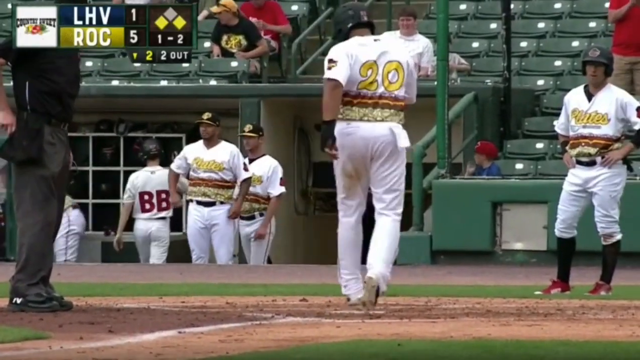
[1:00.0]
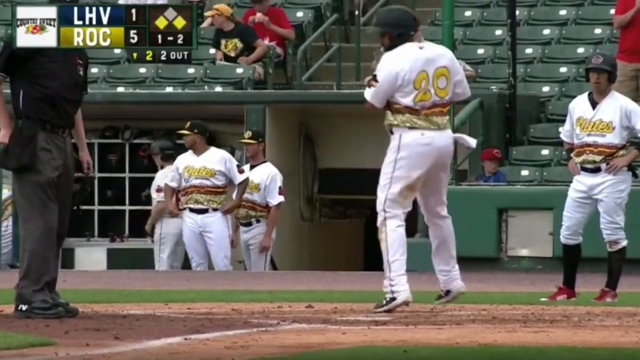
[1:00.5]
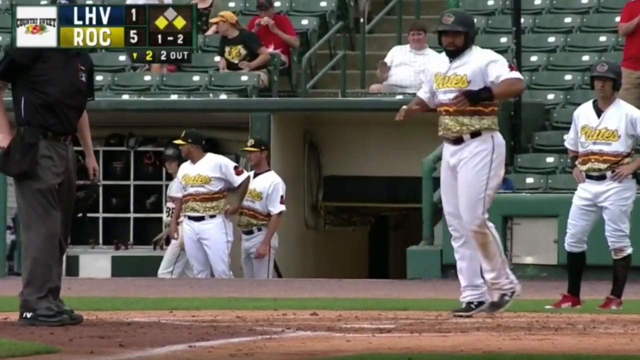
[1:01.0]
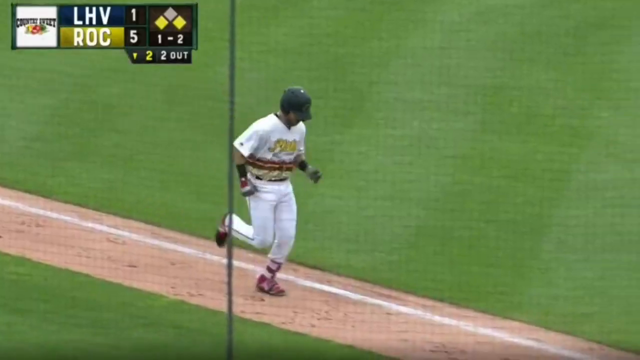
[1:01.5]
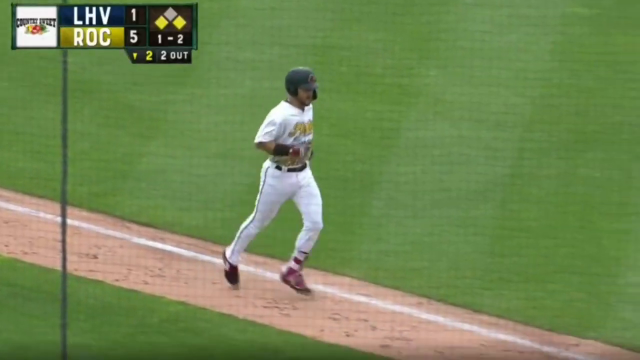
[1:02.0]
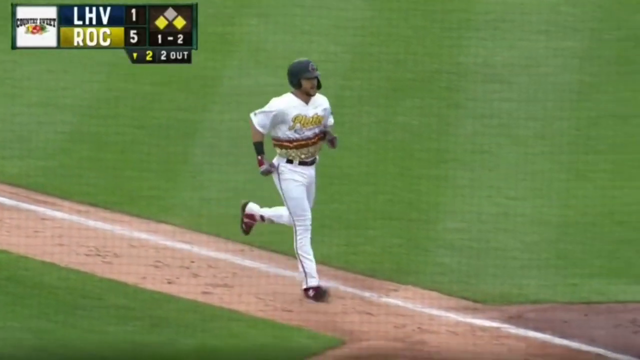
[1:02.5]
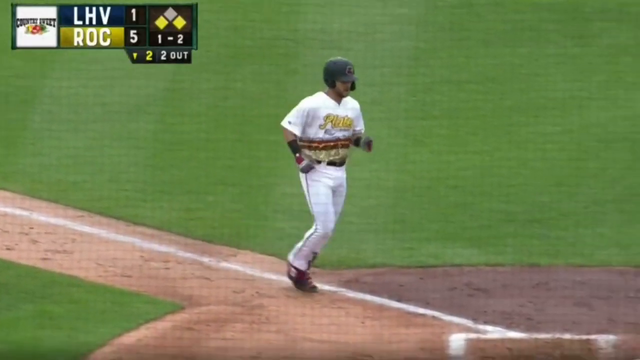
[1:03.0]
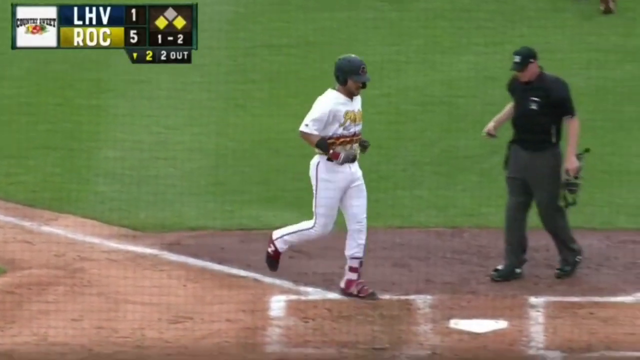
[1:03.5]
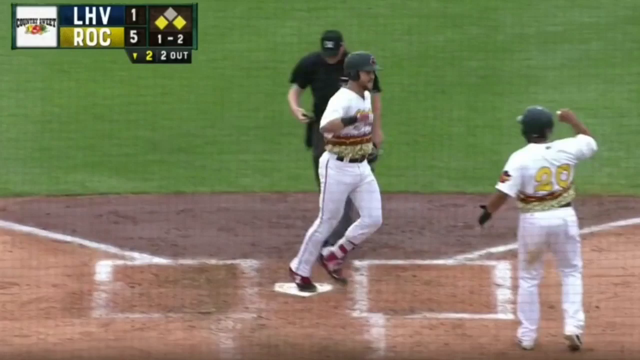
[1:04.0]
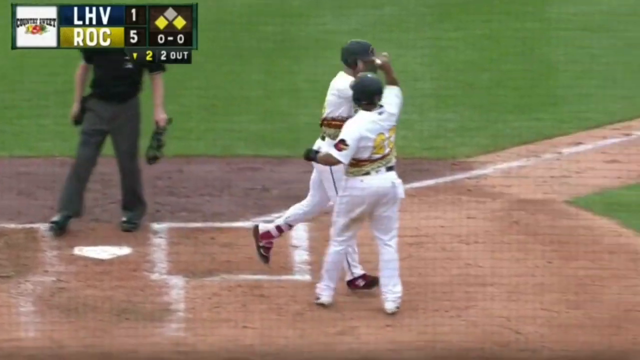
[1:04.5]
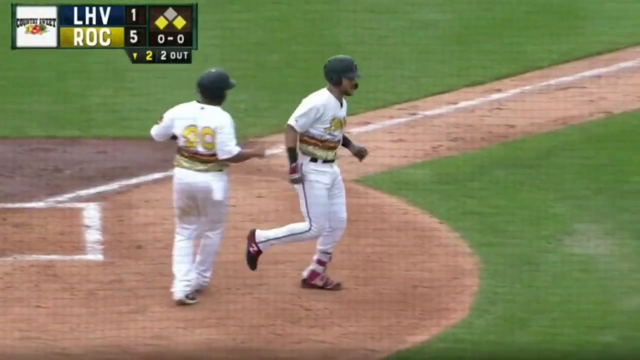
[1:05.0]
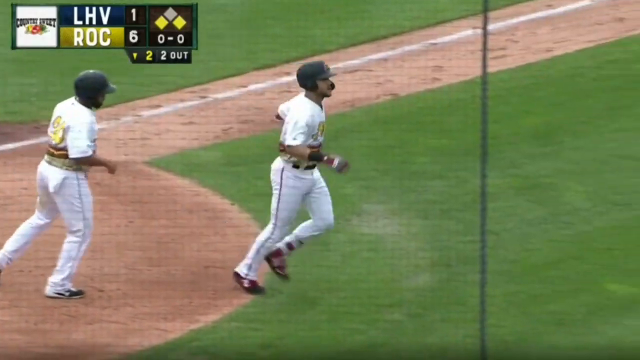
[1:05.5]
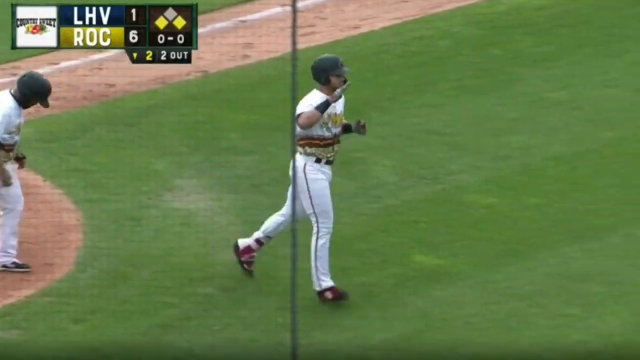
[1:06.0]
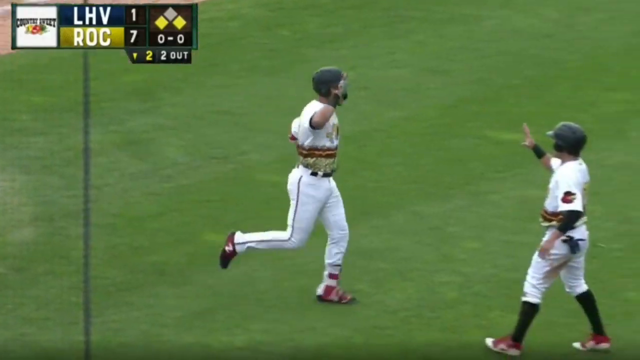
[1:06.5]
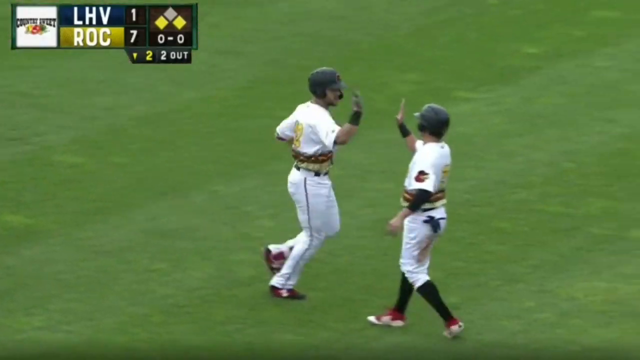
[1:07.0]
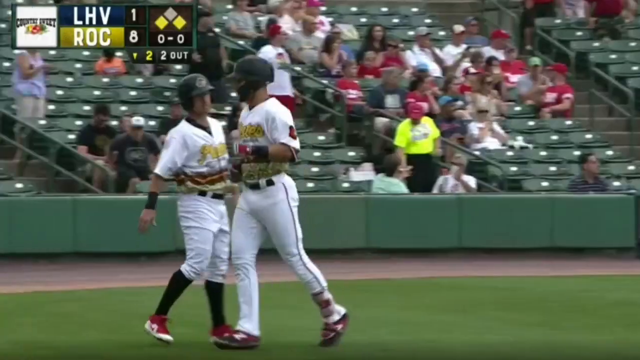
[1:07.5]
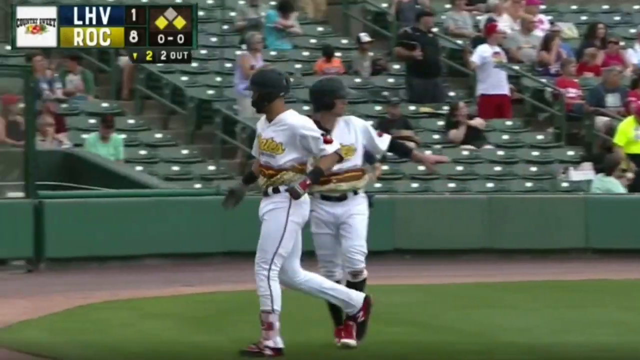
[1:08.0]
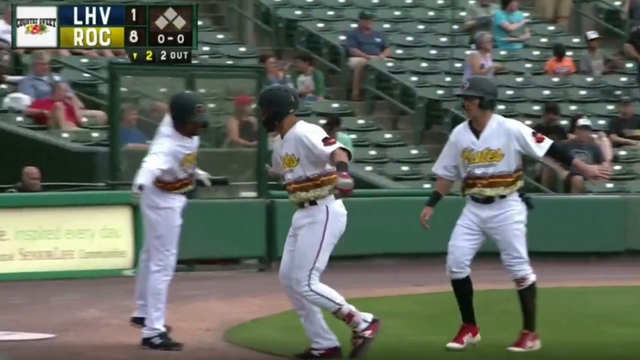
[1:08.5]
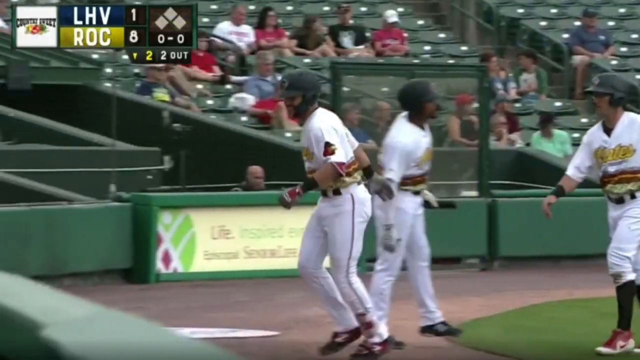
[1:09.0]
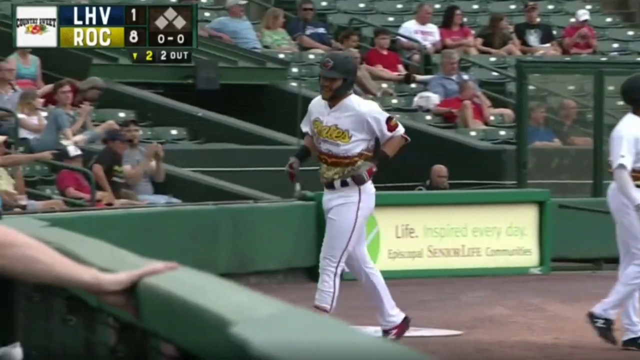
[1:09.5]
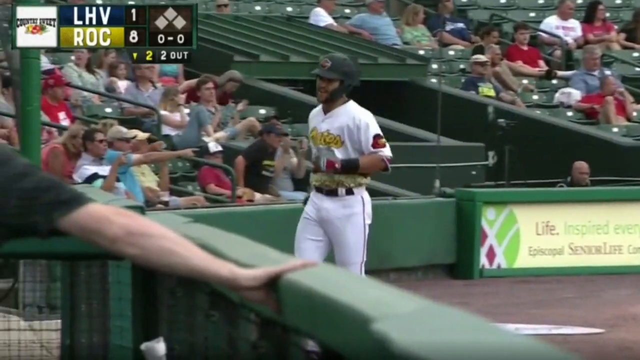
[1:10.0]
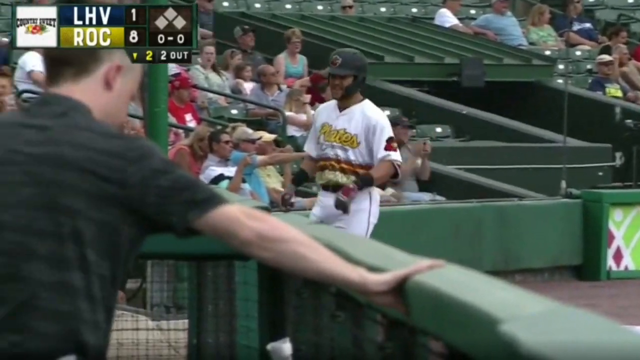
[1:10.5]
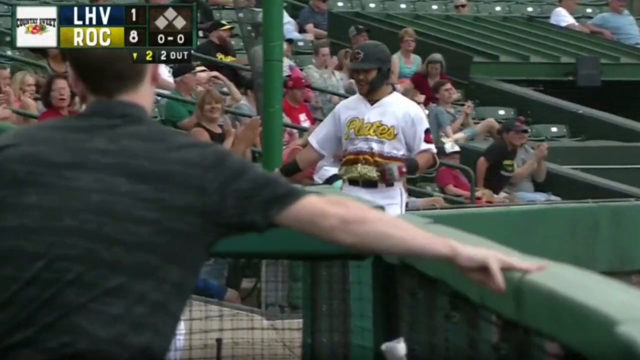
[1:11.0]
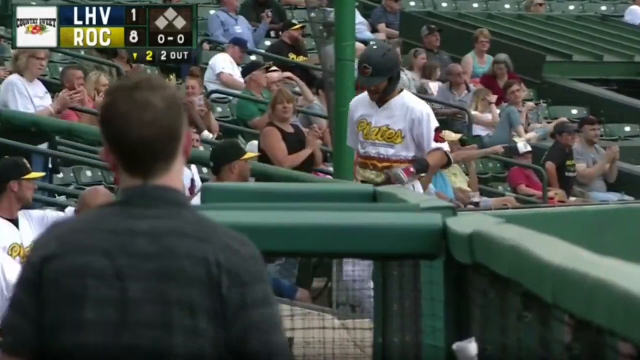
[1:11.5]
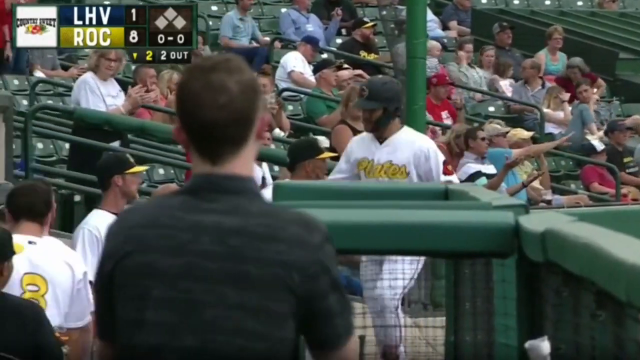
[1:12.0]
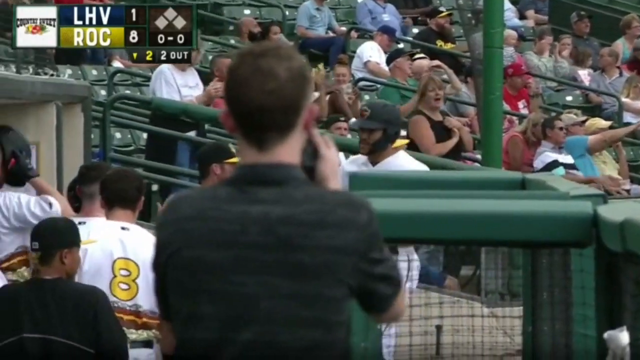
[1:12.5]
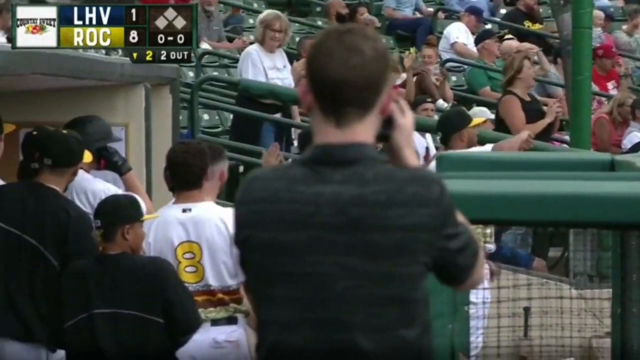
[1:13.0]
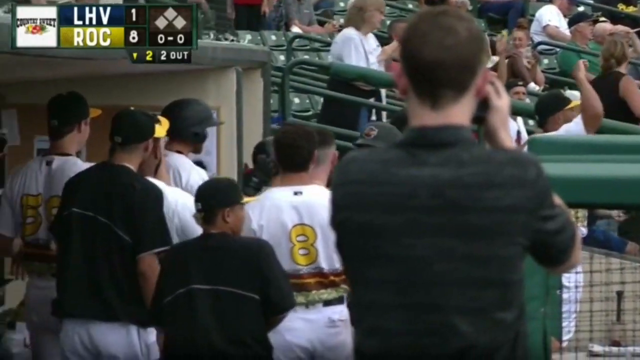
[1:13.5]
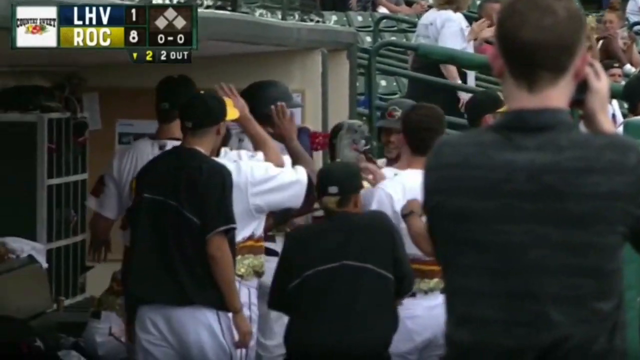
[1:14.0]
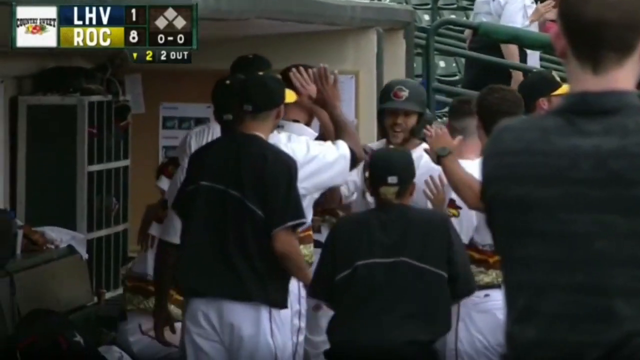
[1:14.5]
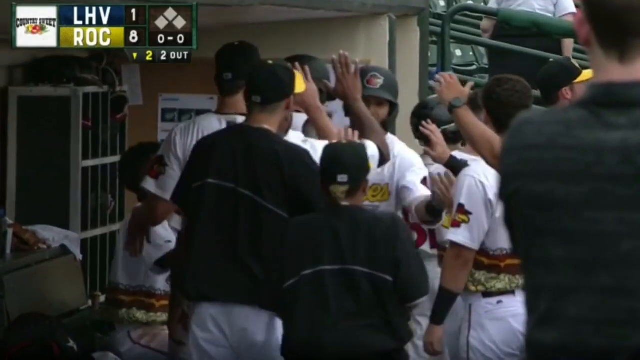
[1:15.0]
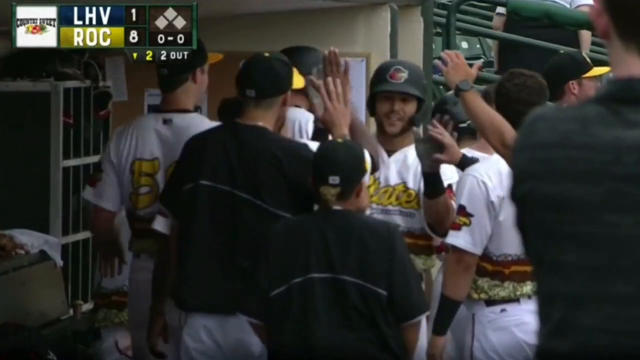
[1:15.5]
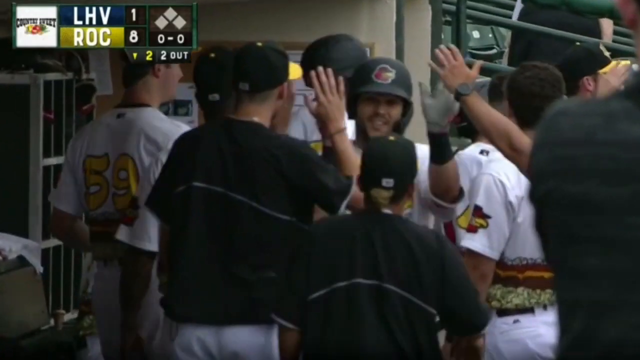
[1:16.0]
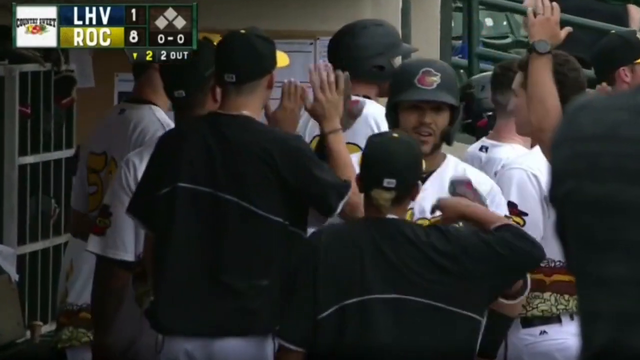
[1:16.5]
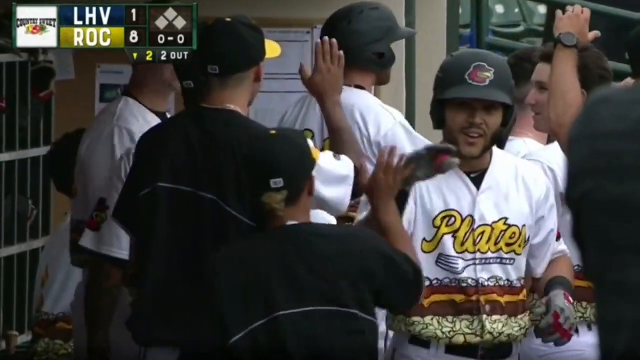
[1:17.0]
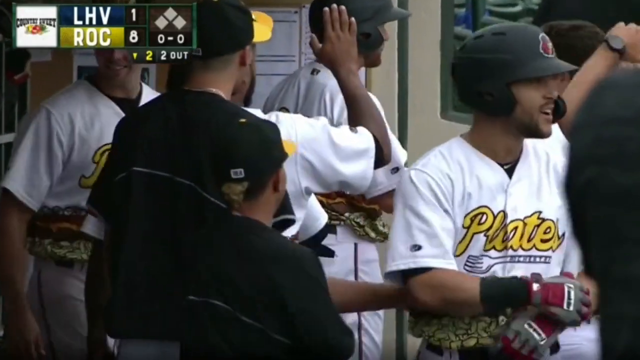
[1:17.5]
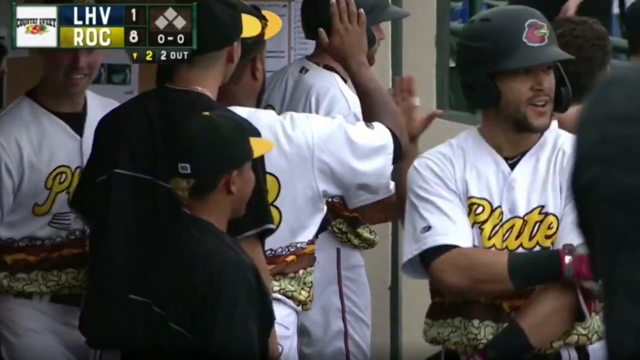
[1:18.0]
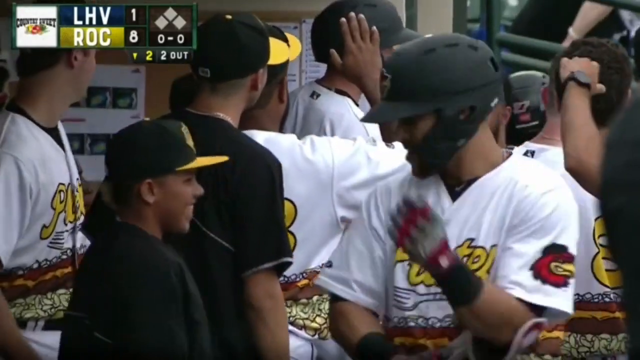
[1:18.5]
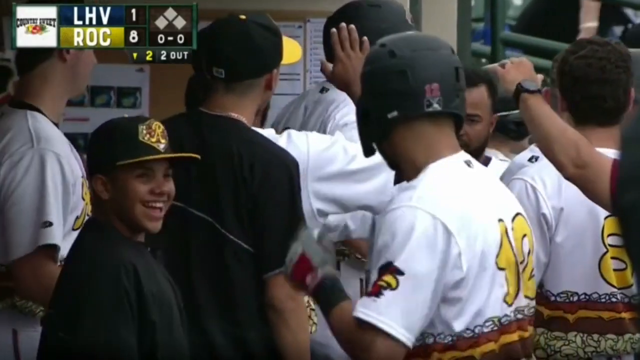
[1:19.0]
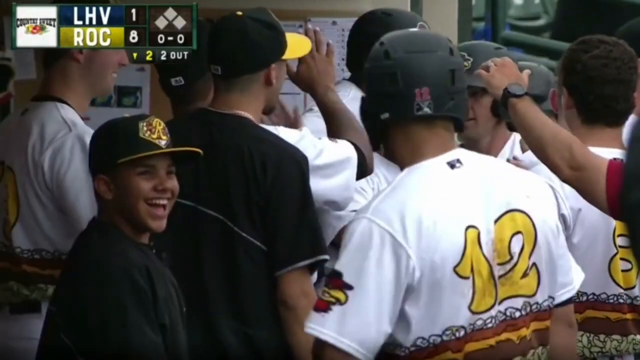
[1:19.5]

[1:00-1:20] The game takes place in a baseball stadium, with the scoreboard in the top left section of the screen showing LHV at 1 and ROC at 8. The two teams play against each other, and in the background the players' jerseys and the colors of the numbers on them are visible.